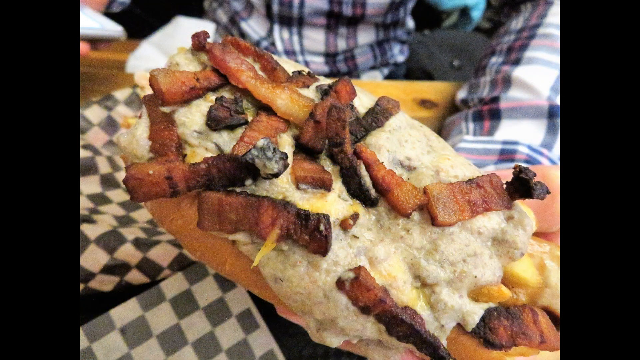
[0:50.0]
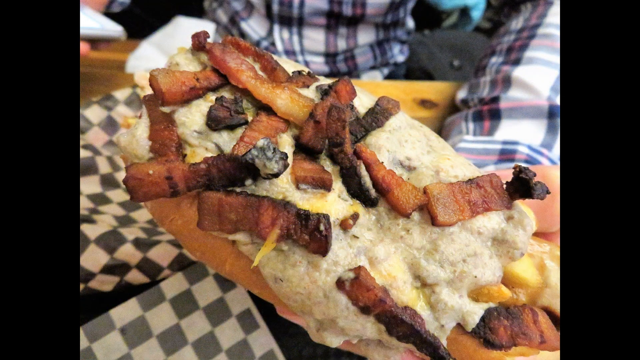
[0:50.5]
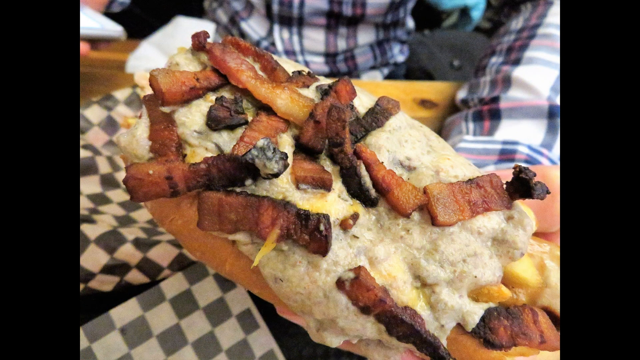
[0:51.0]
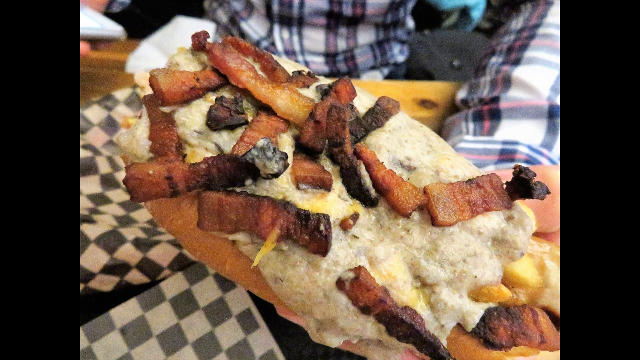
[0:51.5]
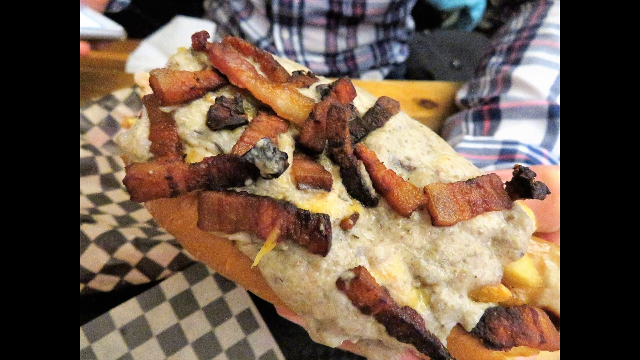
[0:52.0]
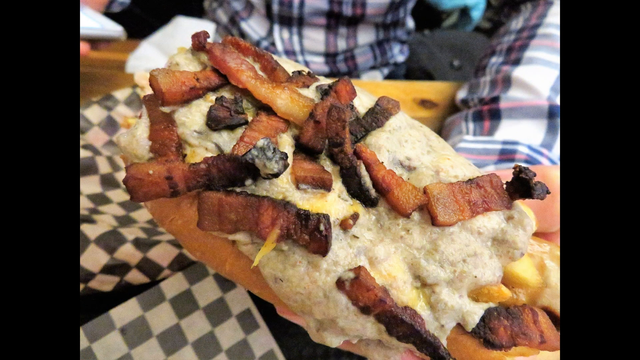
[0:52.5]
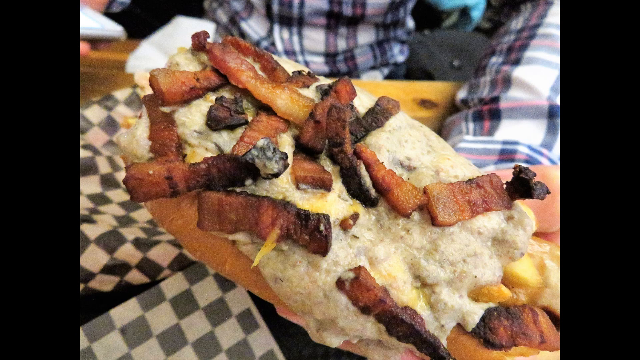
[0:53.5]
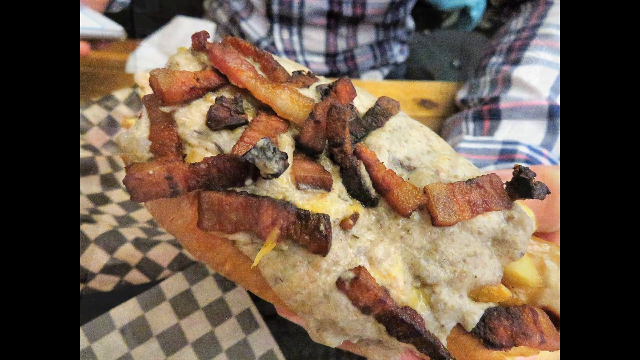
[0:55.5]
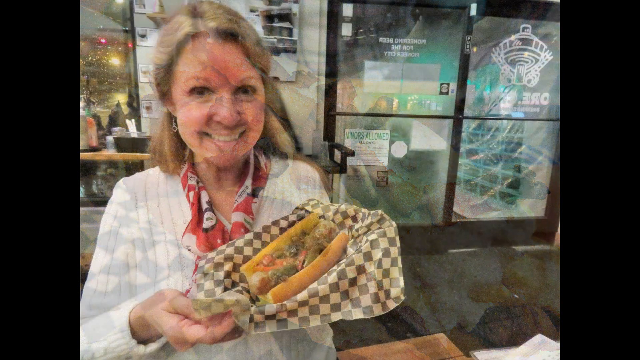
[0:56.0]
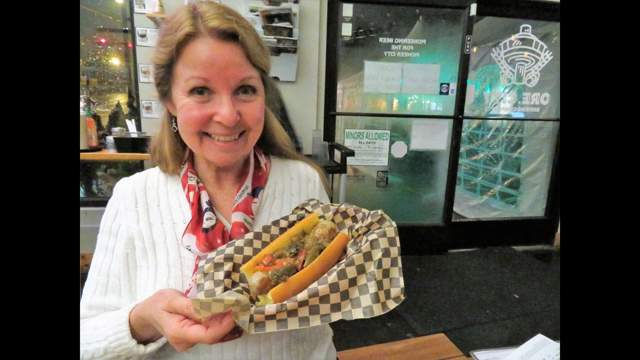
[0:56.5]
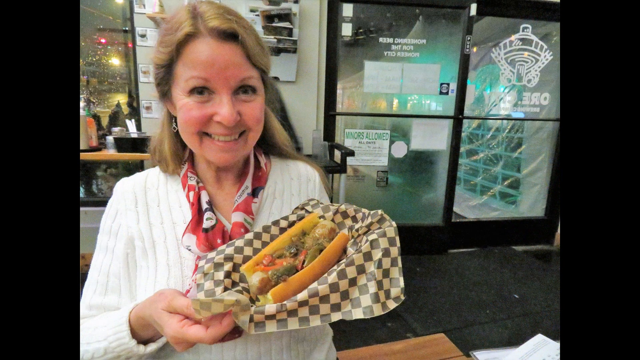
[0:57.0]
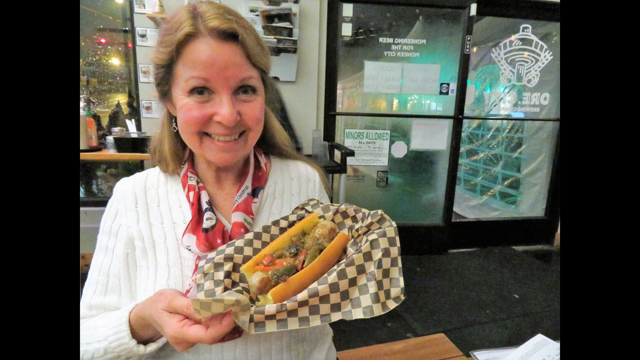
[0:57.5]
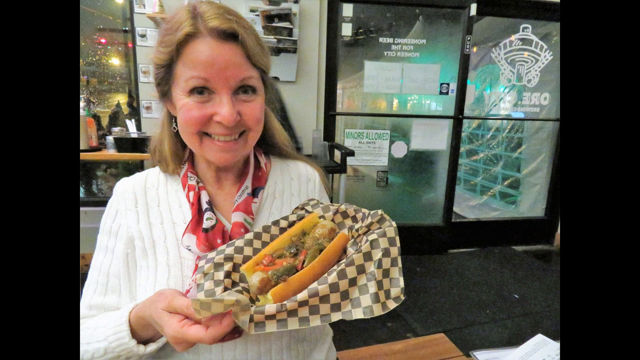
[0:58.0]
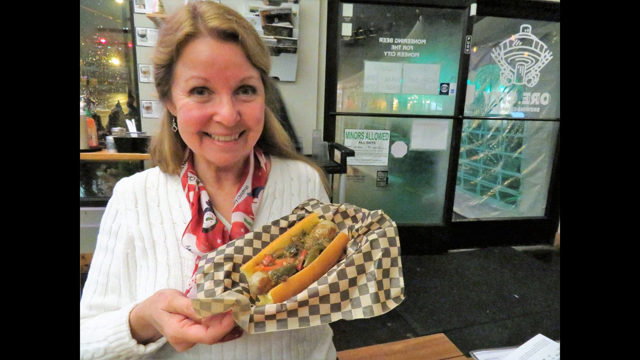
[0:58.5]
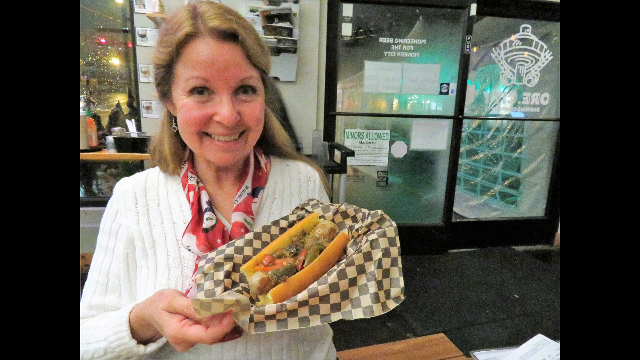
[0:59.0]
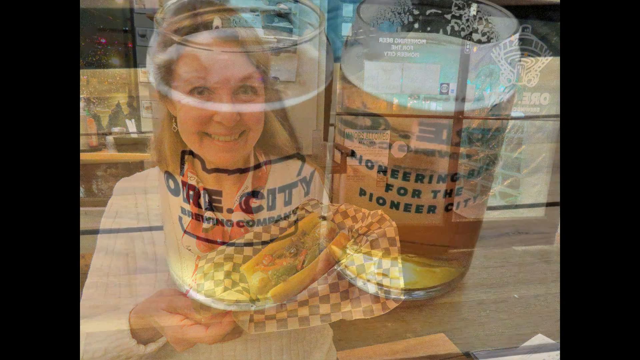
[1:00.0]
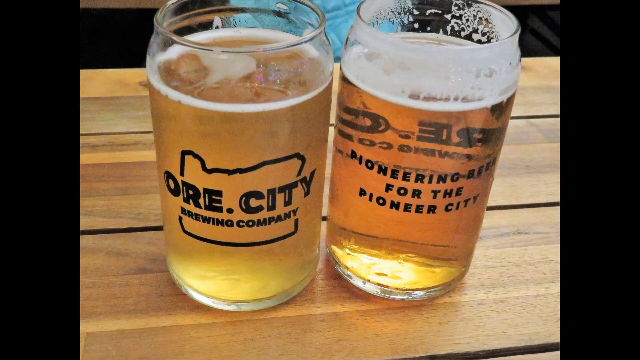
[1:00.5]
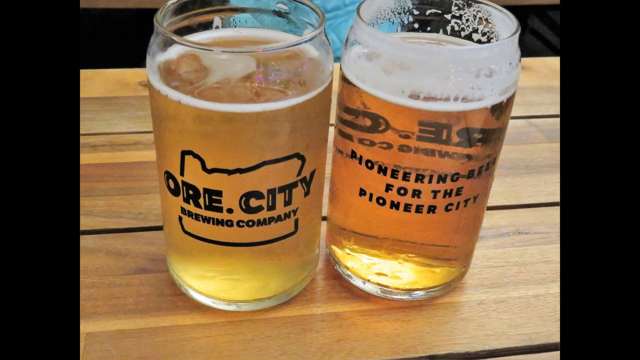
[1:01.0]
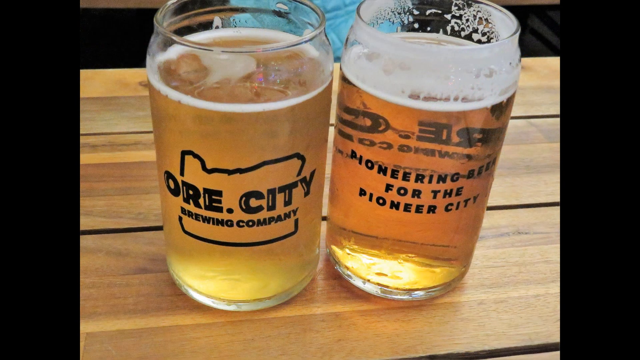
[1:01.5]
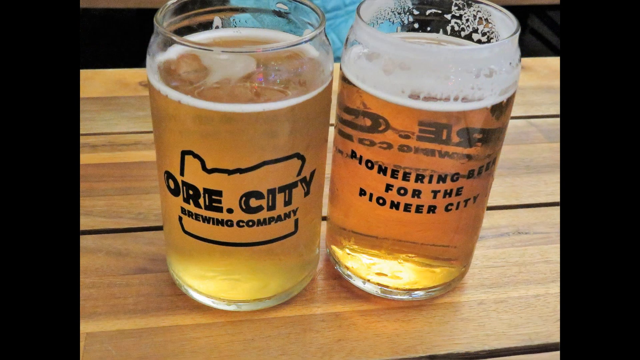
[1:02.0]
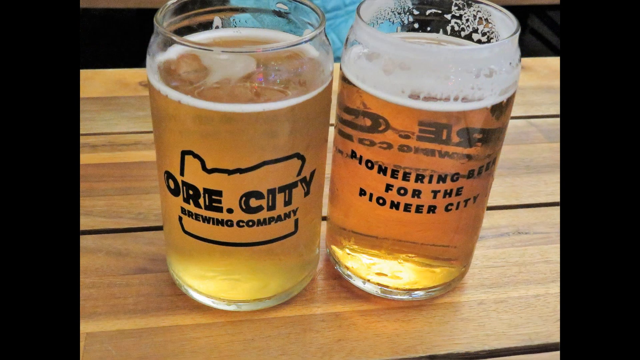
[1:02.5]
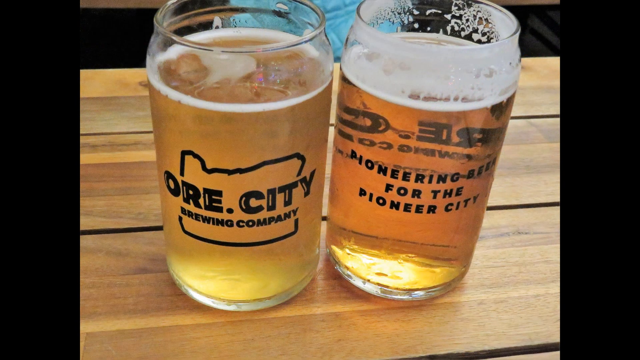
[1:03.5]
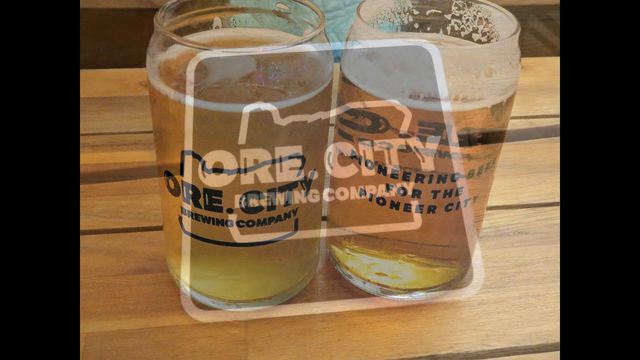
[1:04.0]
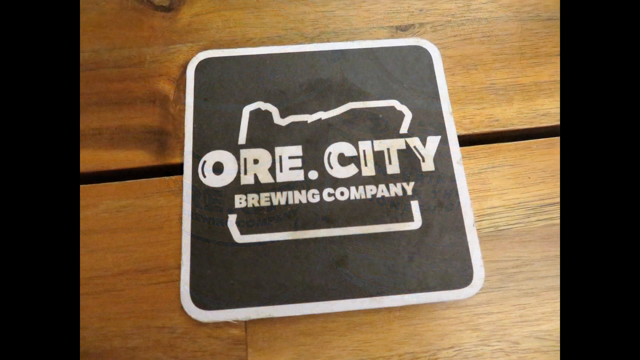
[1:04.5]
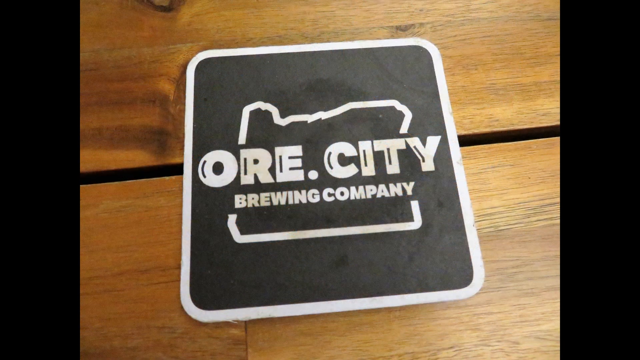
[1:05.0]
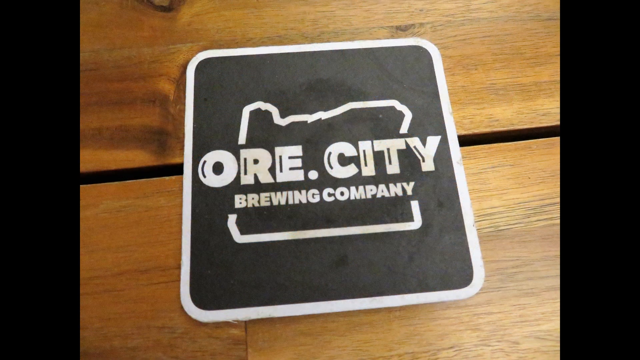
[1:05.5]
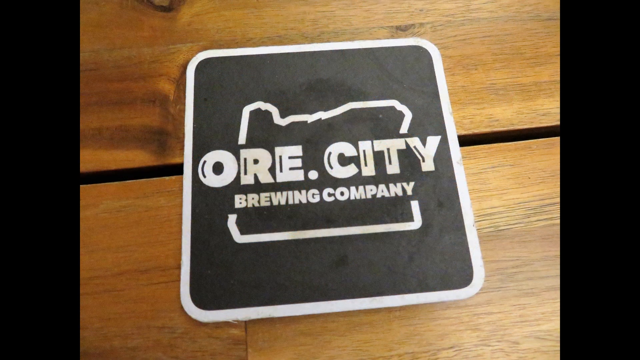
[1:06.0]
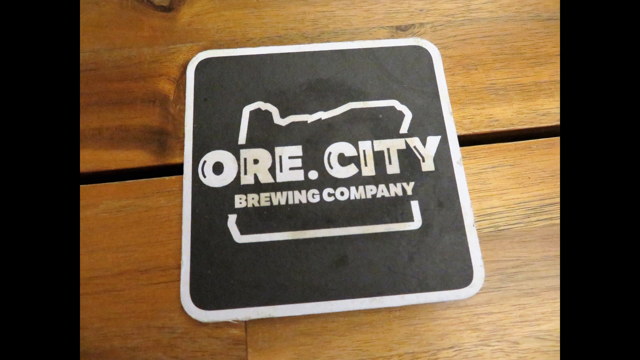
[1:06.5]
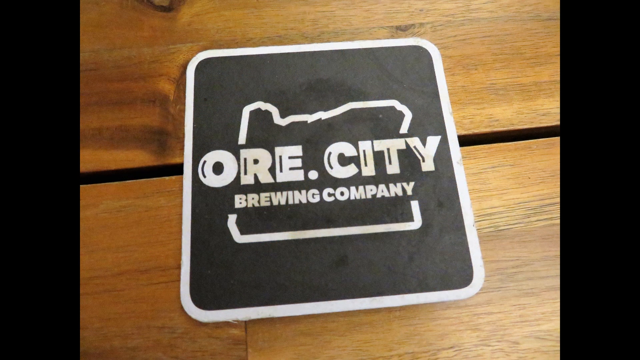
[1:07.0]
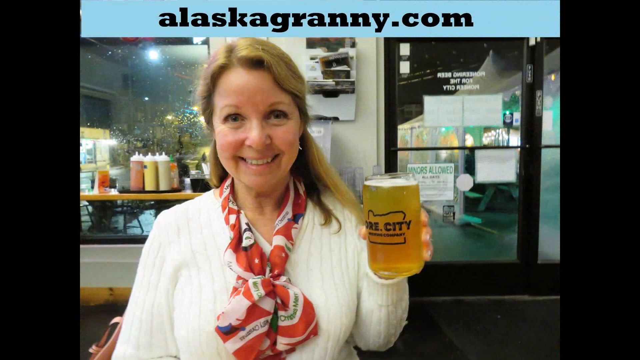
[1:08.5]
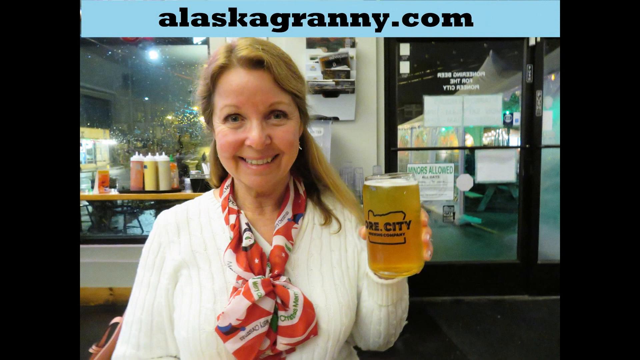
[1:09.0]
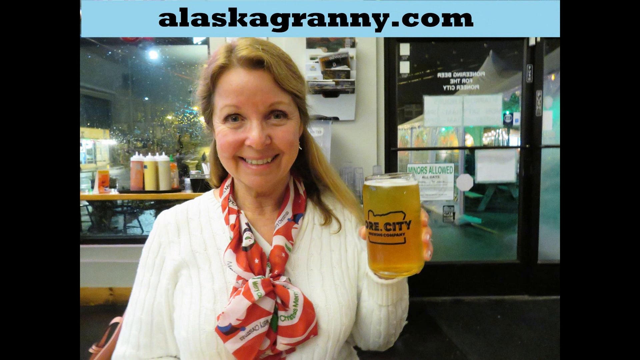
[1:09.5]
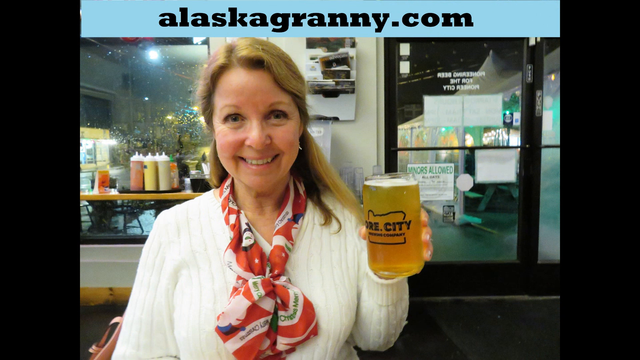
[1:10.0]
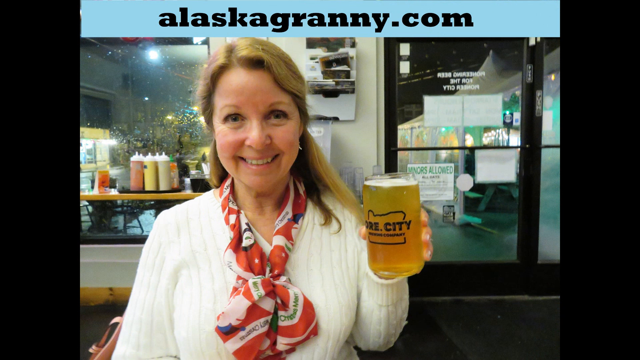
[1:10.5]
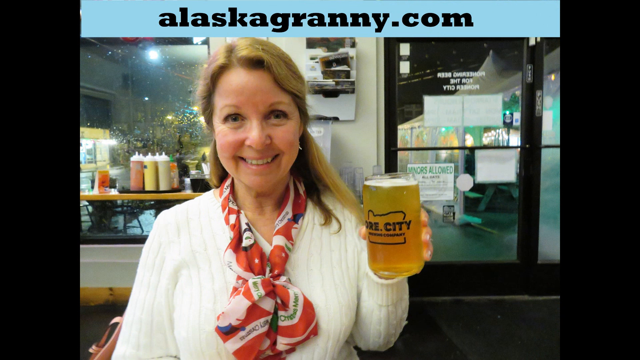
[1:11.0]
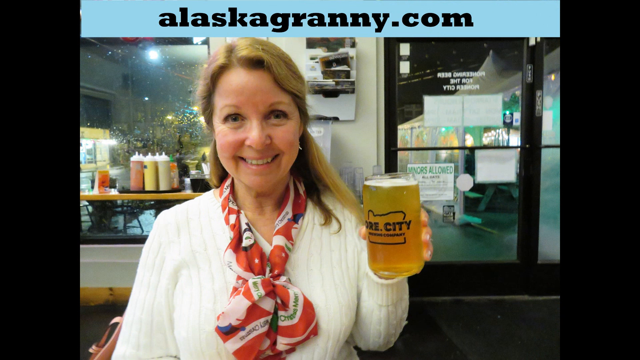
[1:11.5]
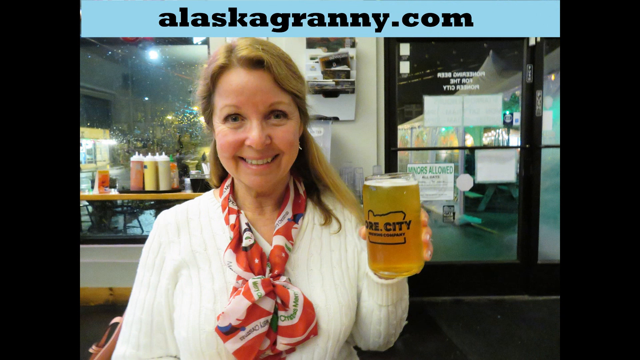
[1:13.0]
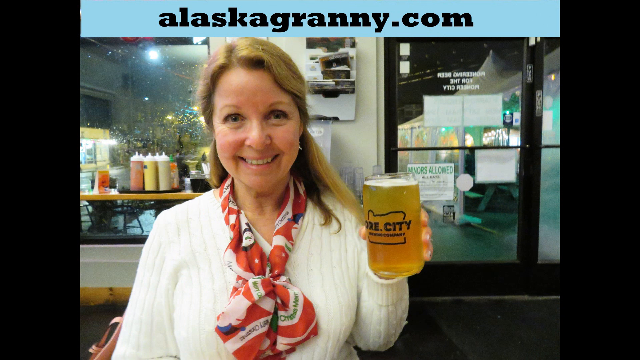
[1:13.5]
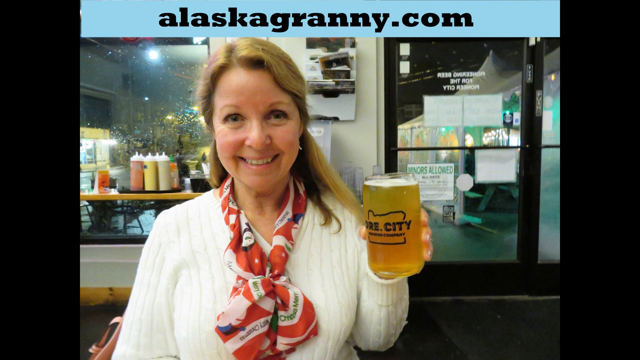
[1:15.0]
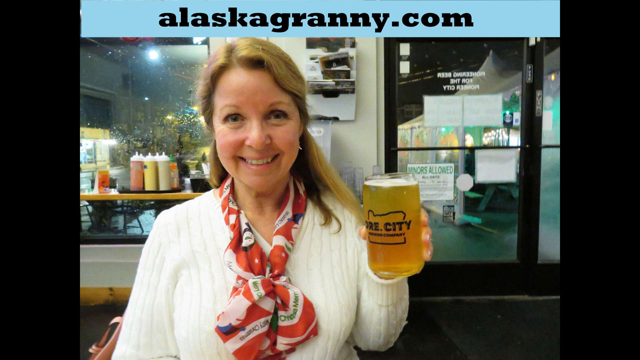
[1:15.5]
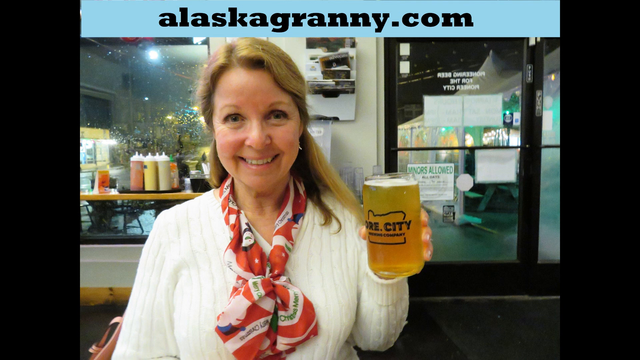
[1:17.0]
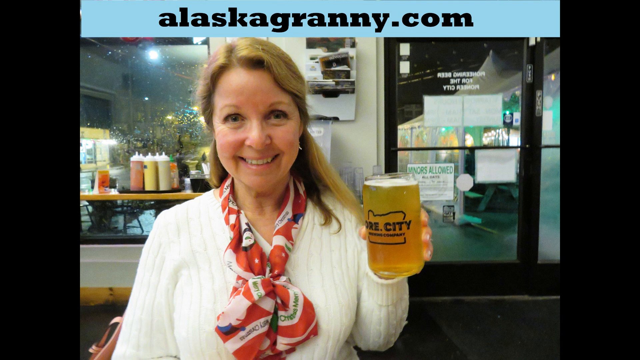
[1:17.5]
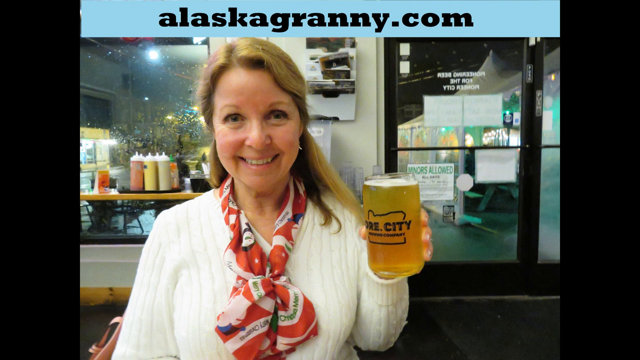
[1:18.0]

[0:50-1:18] Food is shown, including items that look like water dogs but not like real ones. Two glasses of beer appear with "brewing" written on them. A young woman smiles while holding a glass of beer. Many things are put up on the wall.